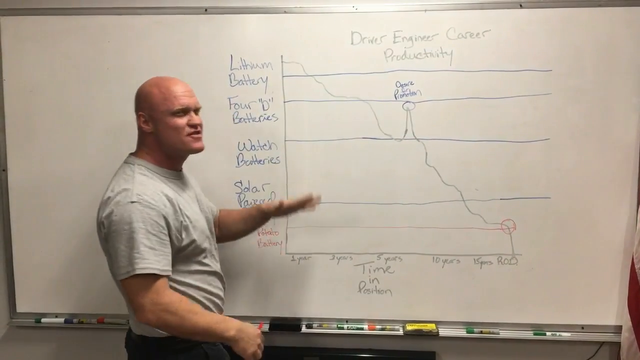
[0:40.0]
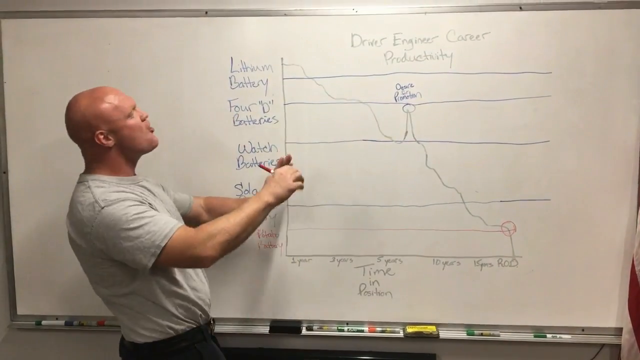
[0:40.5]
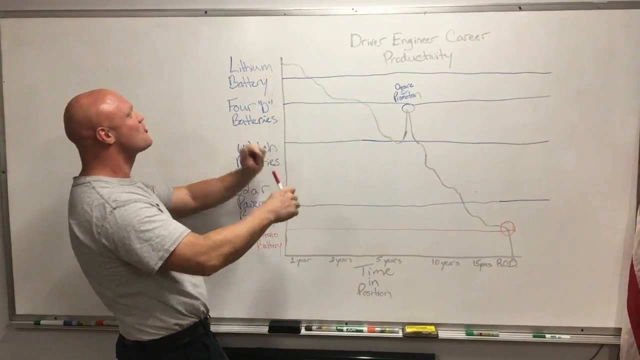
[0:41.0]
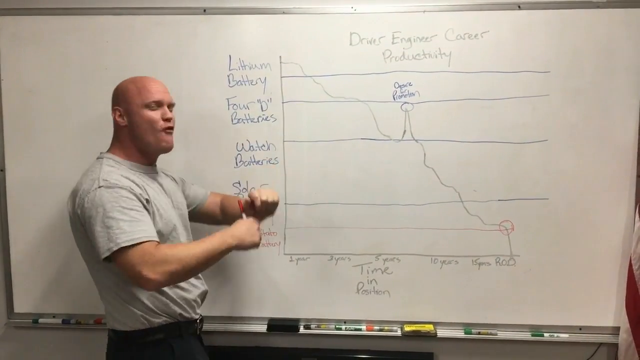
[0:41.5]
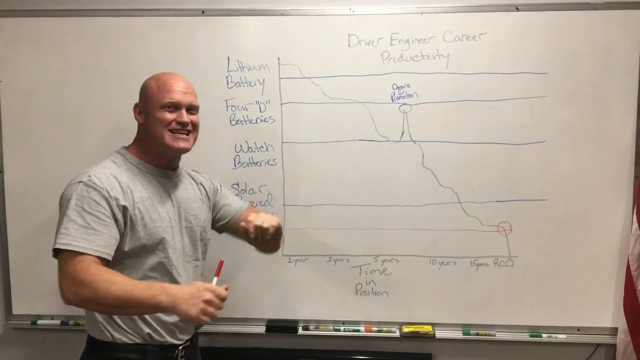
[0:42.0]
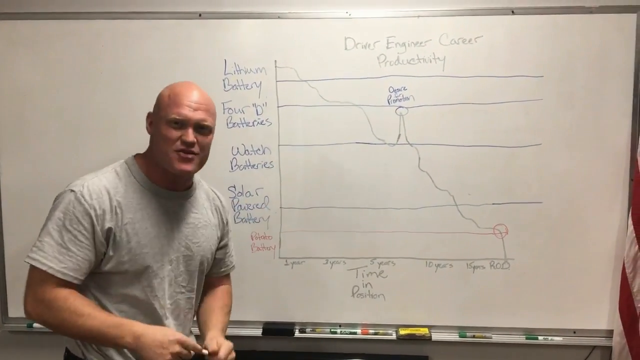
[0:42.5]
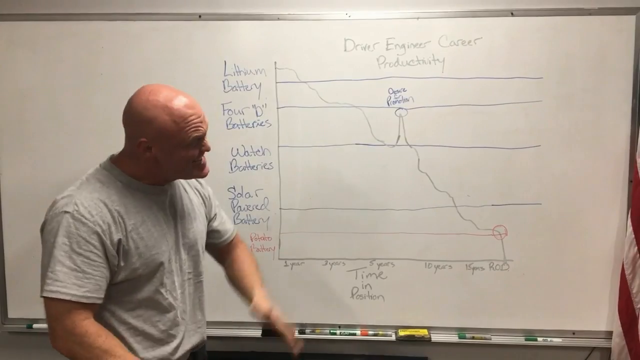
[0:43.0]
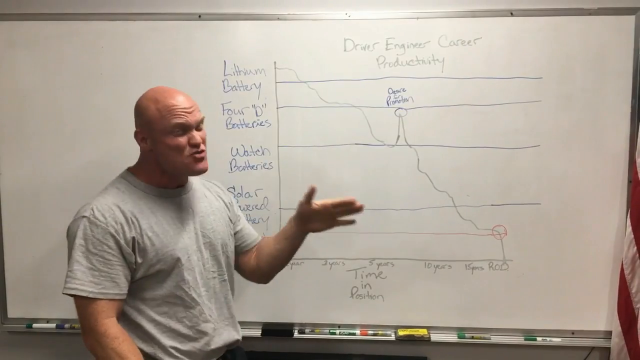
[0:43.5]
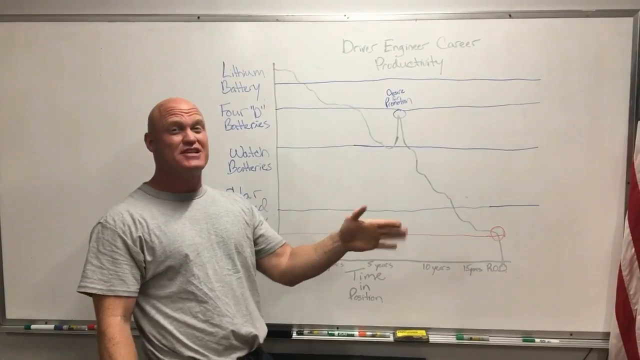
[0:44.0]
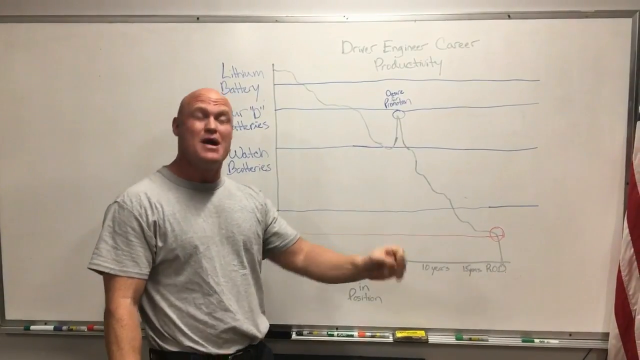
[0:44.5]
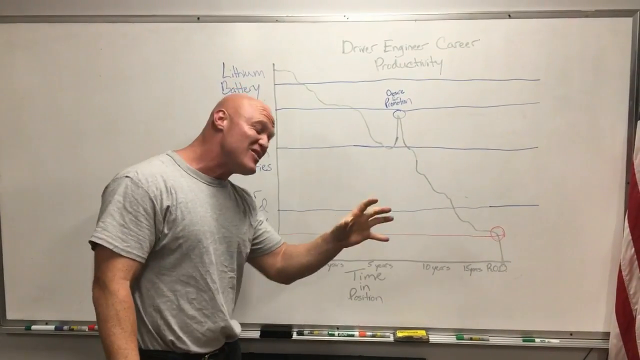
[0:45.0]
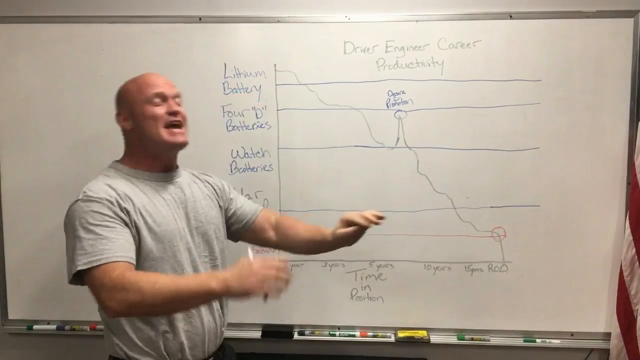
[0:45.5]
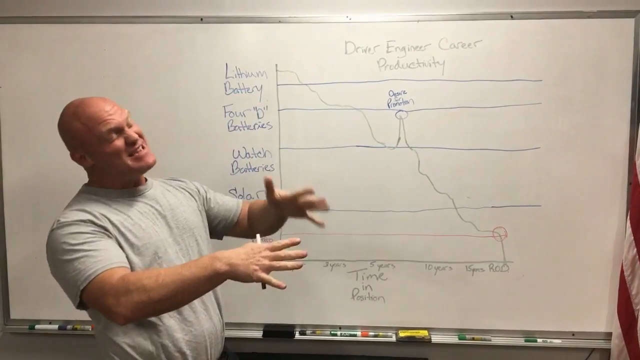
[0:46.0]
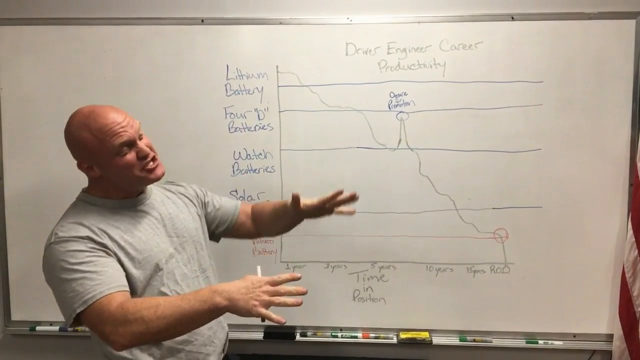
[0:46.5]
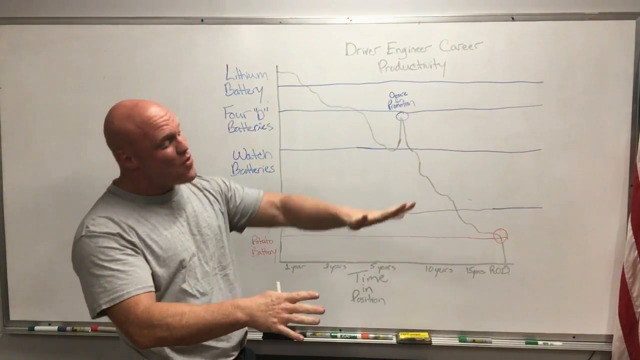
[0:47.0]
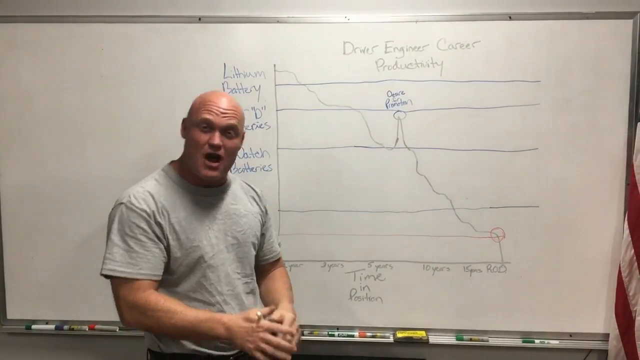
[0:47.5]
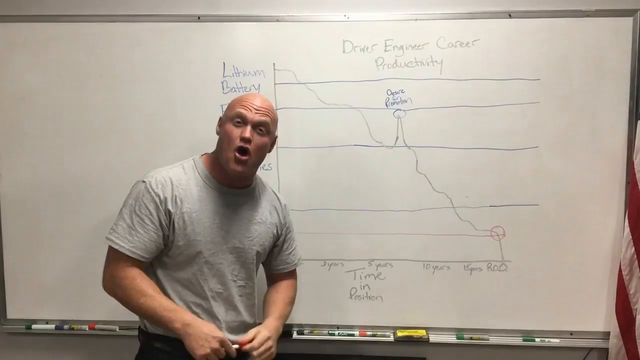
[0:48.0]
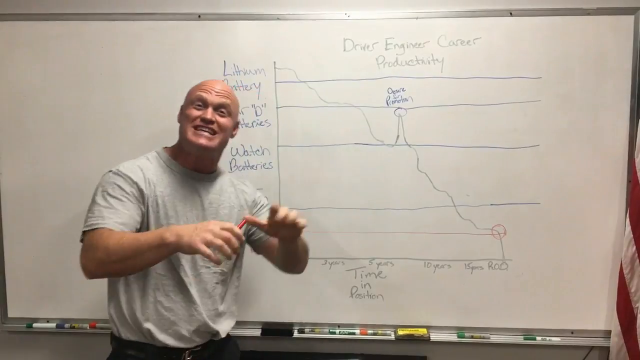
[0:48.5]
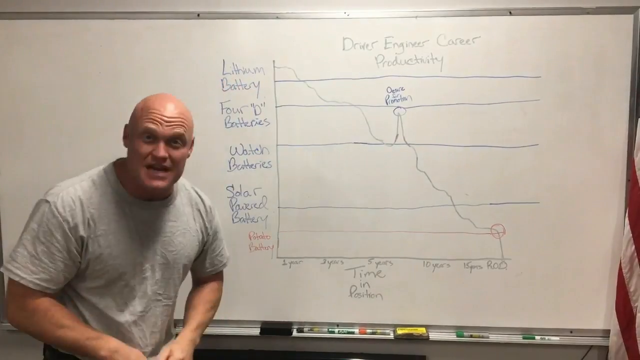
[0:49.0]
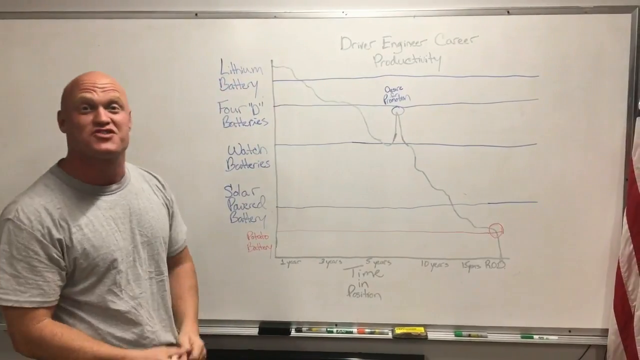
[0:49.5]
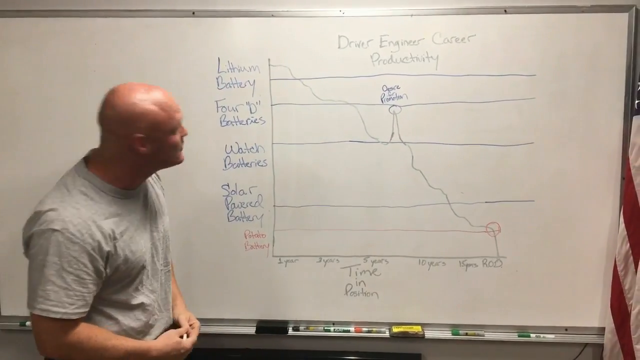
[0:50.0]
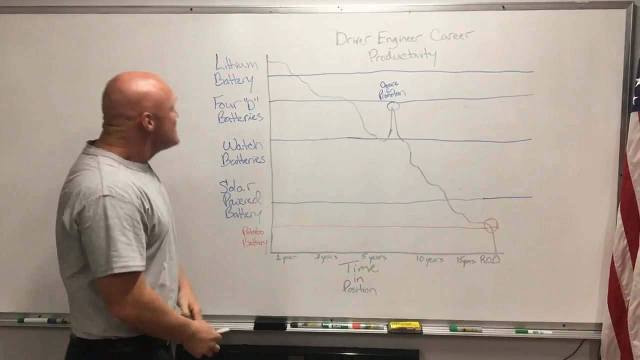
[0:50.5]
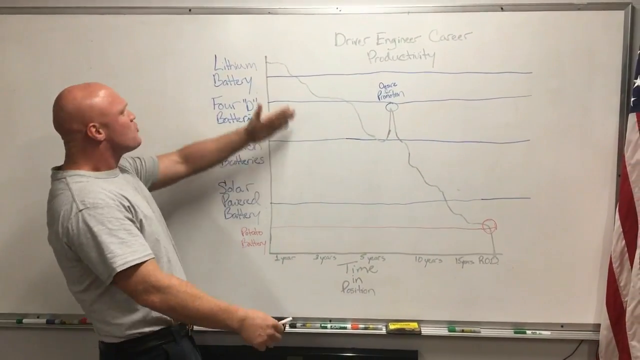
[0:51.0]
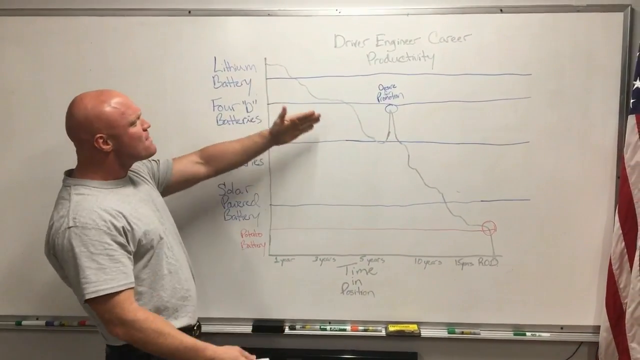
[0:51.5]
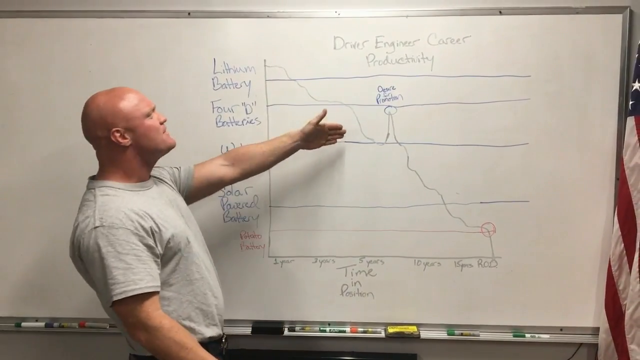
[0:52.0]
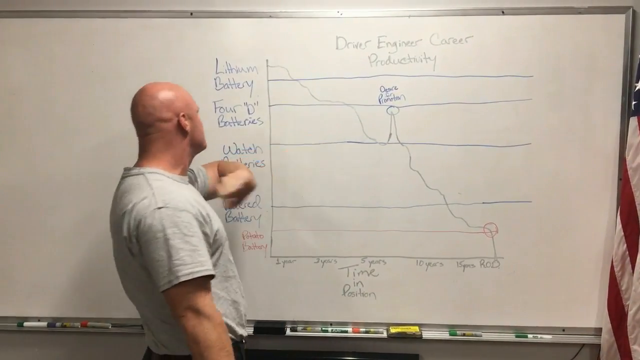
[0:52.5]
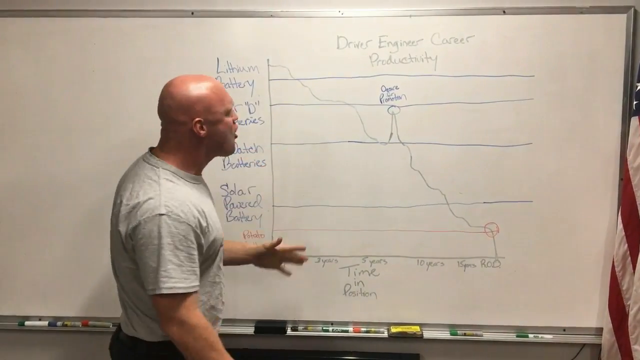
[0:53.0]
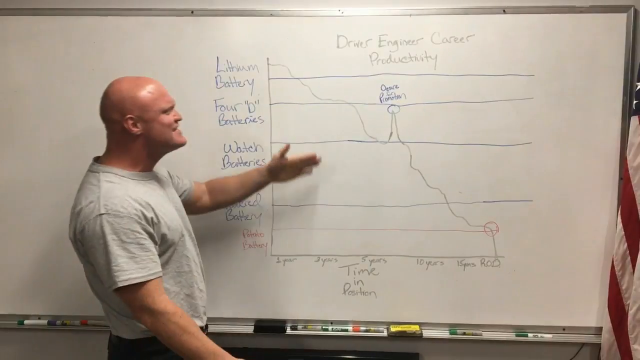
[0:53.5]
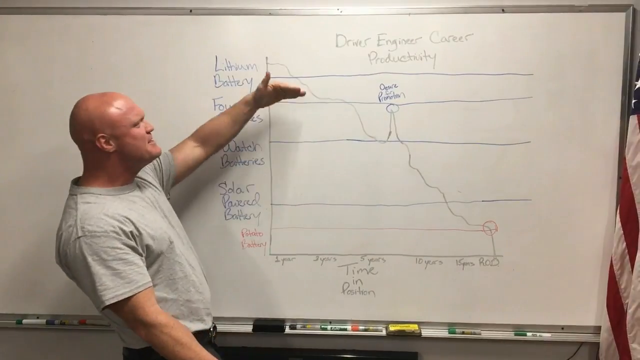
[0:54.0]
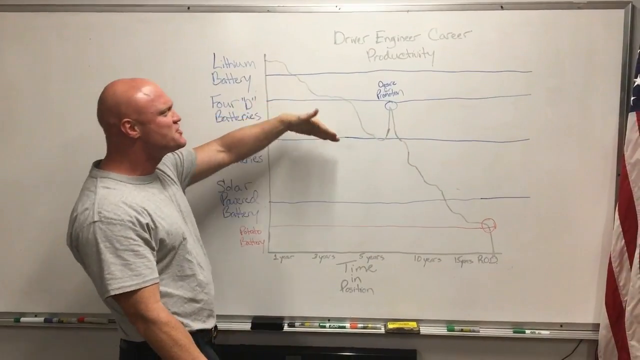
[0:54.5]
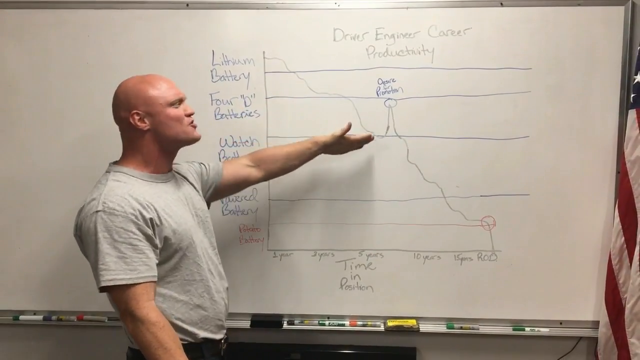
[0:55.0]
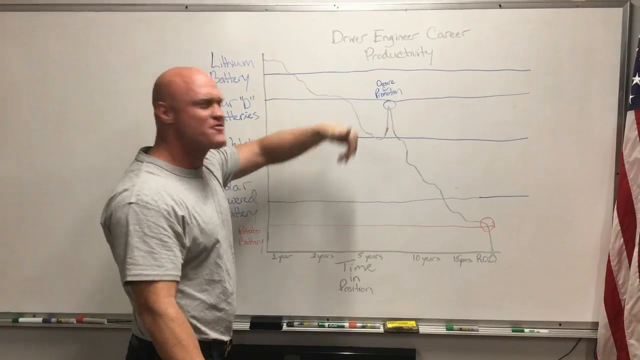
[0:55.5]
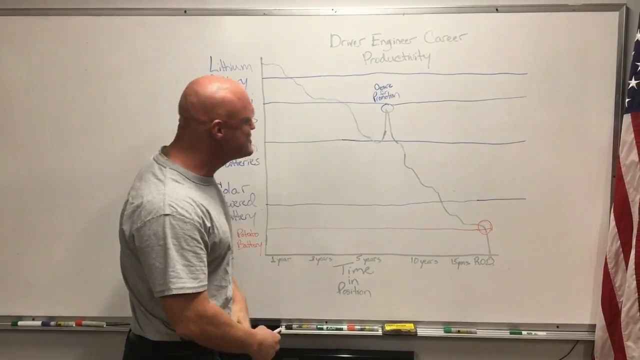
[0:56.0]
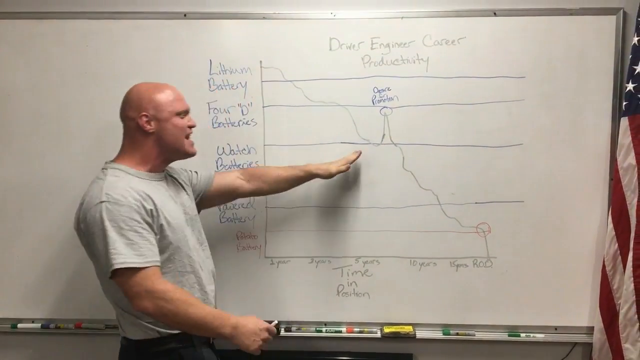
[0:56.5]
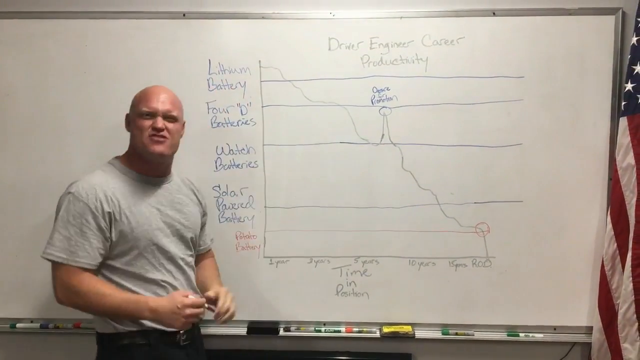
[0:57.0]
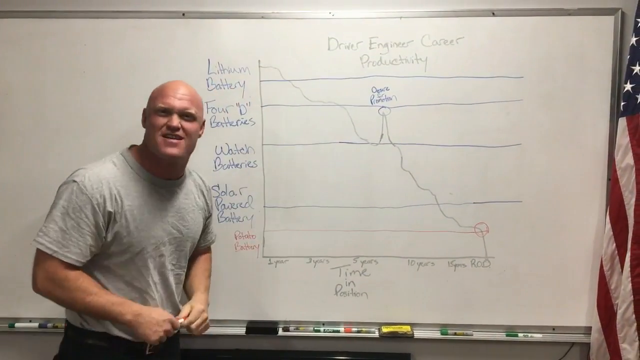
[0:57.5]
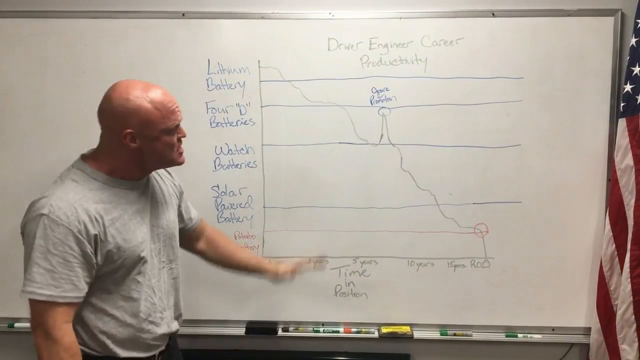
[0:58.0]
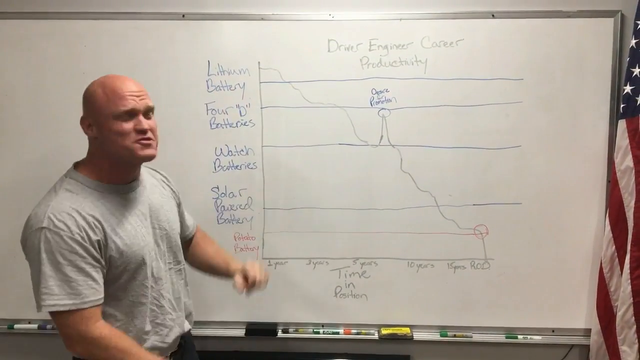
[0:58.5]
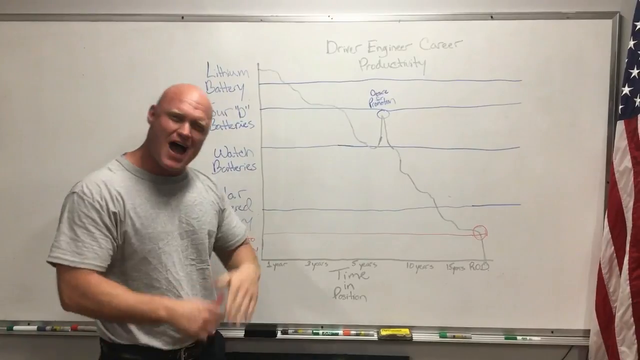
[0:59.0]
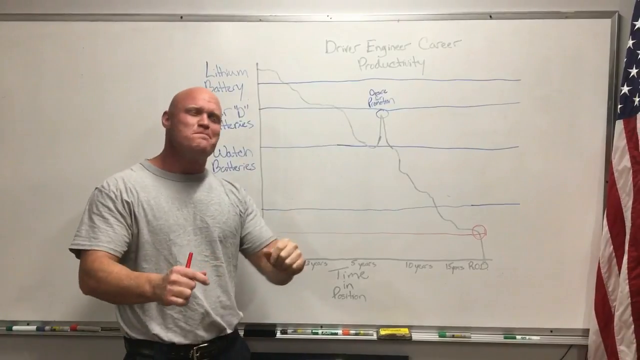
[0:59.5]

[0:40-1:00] The man appears to the left of the whiteboard, which has a graph drawn in marker that reads lithium battery, 4D batteries, watch batteries and solar powered batteries. A line starts at lithium batteries and goes up and down at times but gradually continues downward. Along the bottom of the graph are 1 year, 3 year, 5 year, 10 years, 15 years and so on. He is bald, wears a gray shirt and appears very energetic as he speaks. Holding a marker in his right hand, he is turned toward the camera and gestures to his left, using his hands to explain things. His face is highly dramatic and energetic. He gestures toward the top of the graph and brings his hand down toward the middle, then shows where there is a dip that goes slightly upward but then crashes right back down.